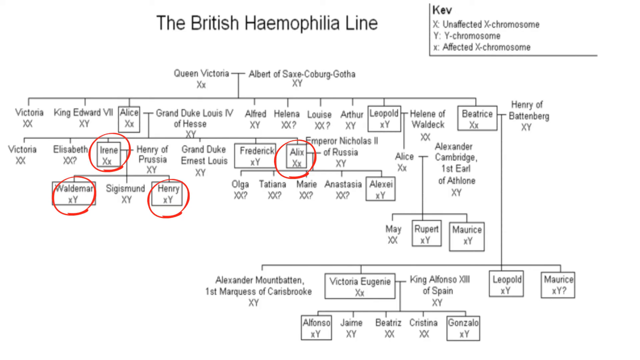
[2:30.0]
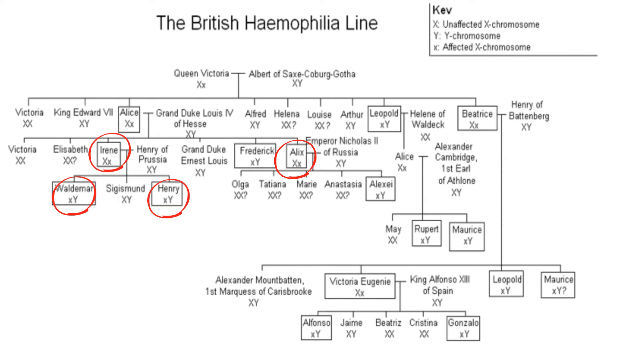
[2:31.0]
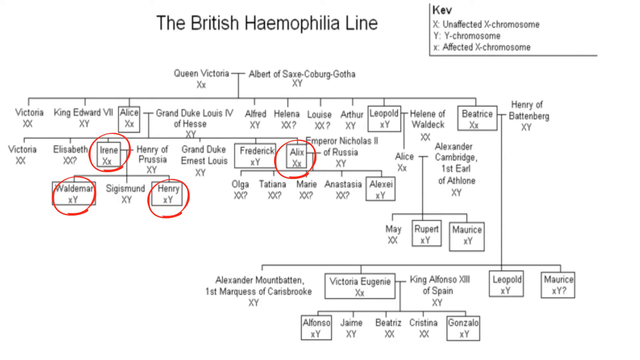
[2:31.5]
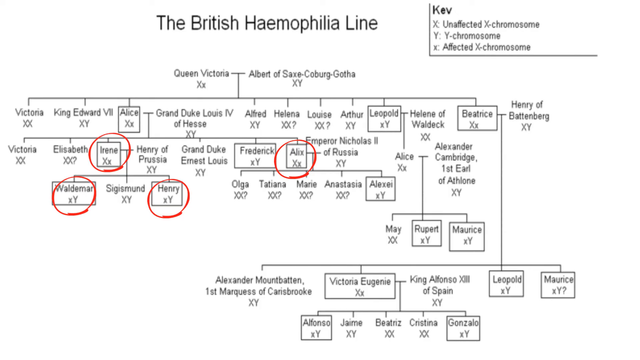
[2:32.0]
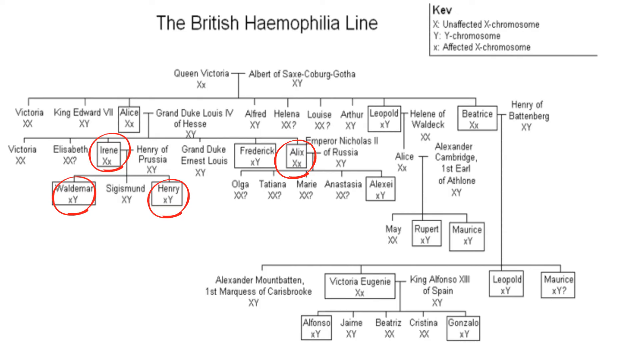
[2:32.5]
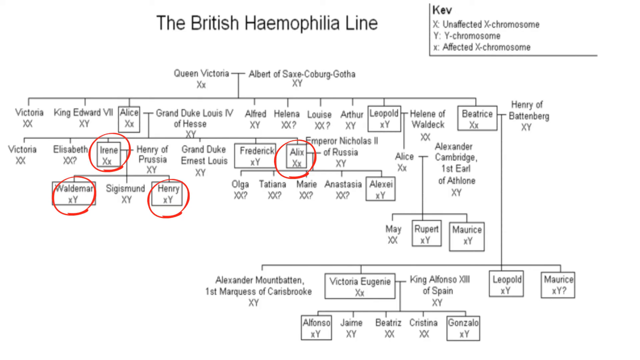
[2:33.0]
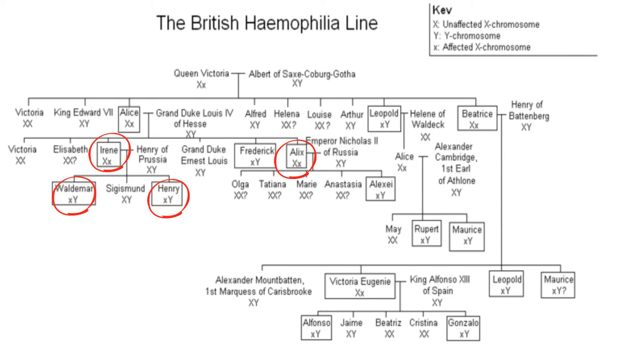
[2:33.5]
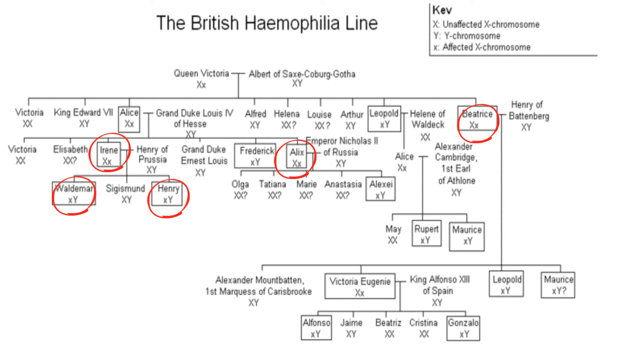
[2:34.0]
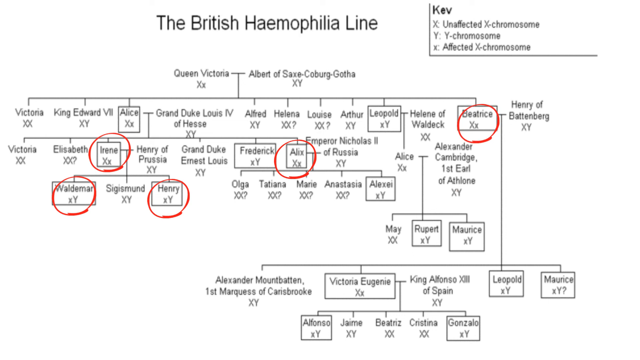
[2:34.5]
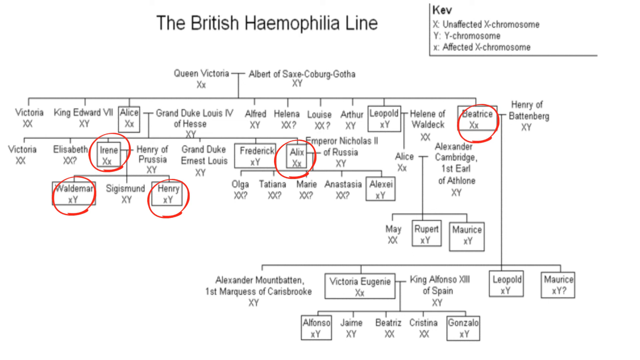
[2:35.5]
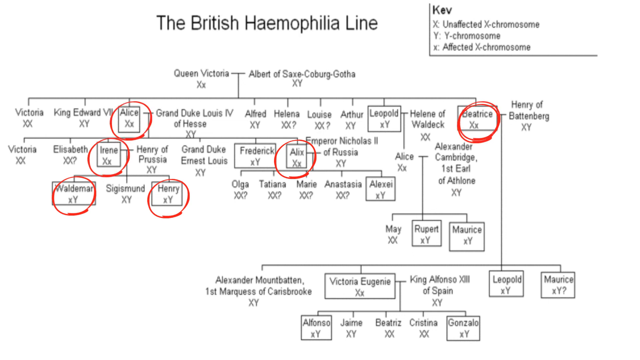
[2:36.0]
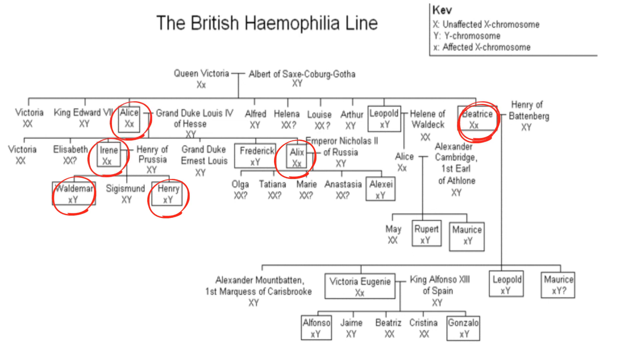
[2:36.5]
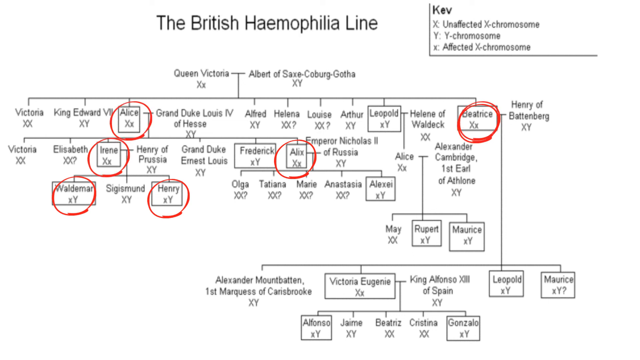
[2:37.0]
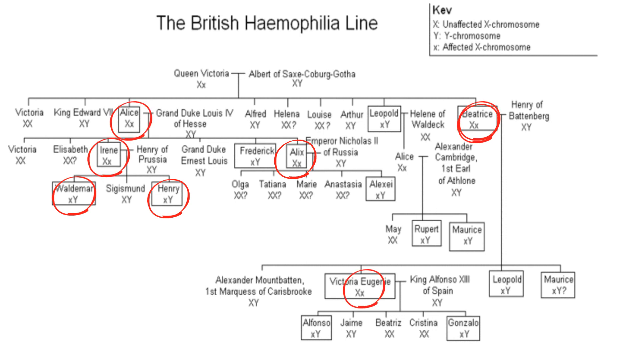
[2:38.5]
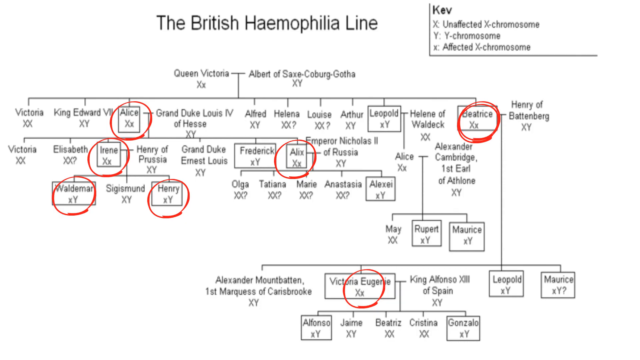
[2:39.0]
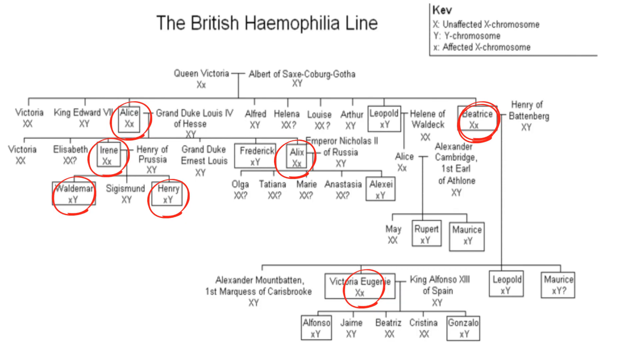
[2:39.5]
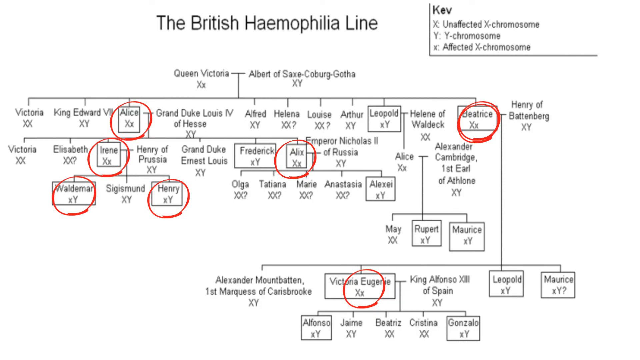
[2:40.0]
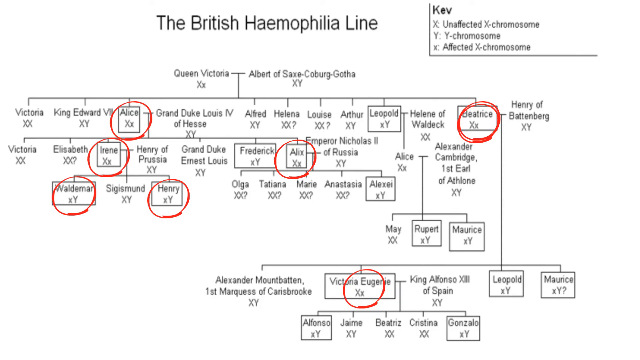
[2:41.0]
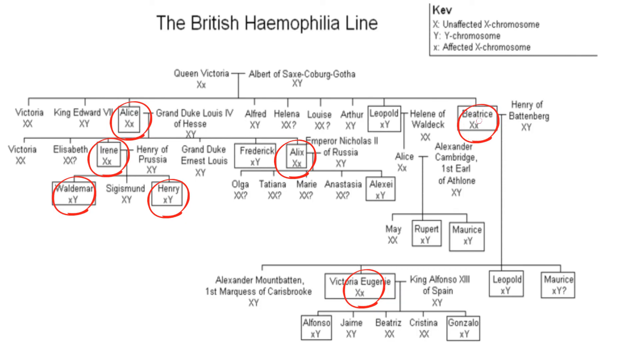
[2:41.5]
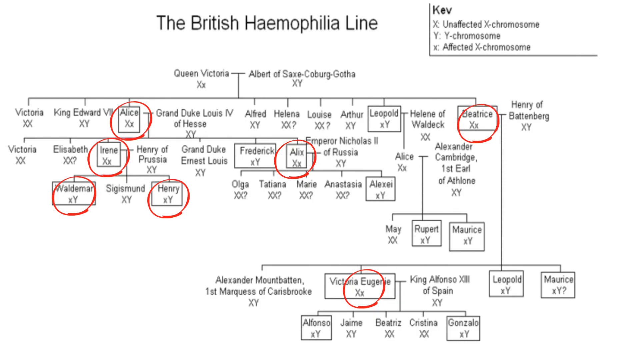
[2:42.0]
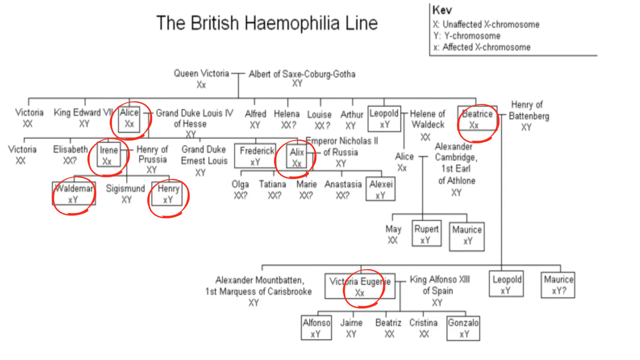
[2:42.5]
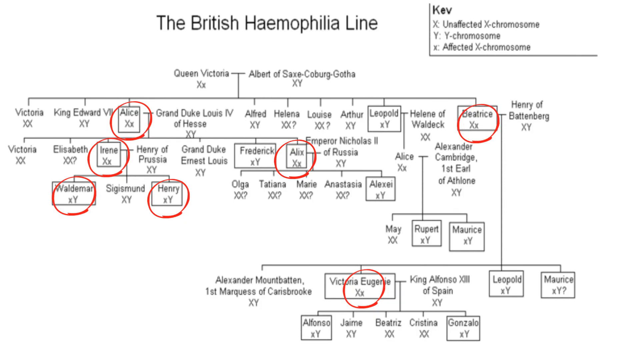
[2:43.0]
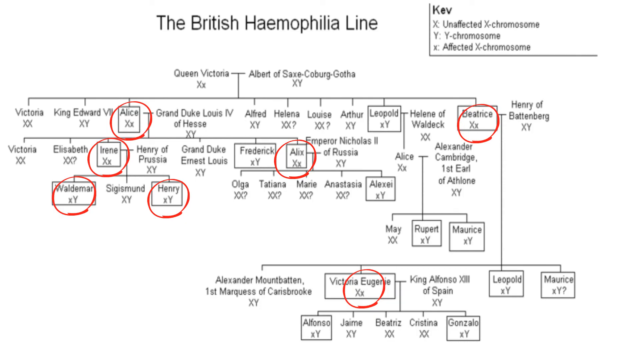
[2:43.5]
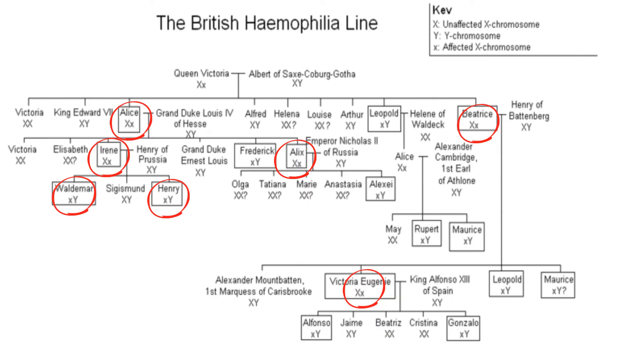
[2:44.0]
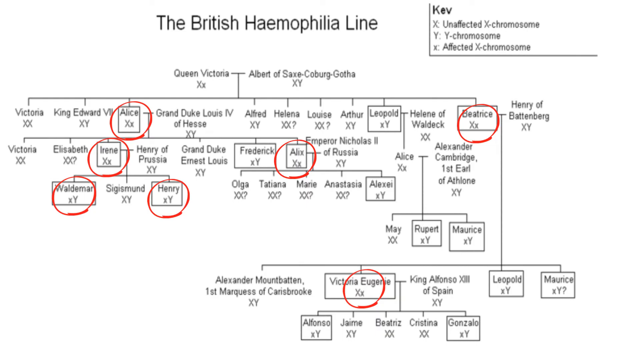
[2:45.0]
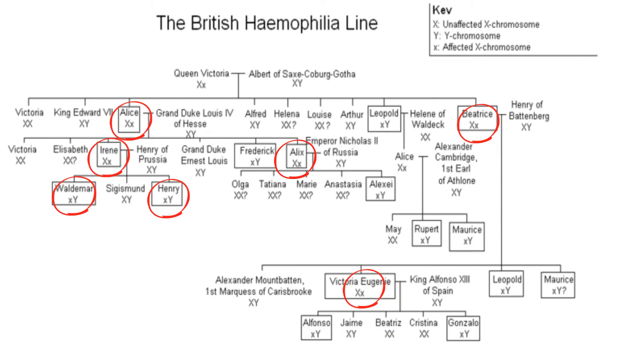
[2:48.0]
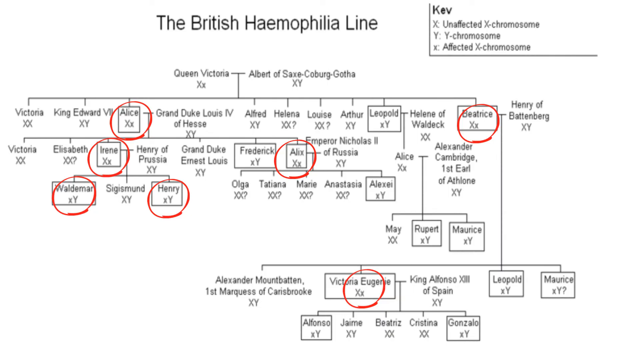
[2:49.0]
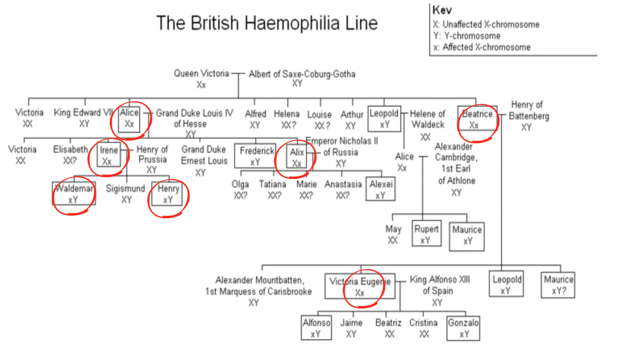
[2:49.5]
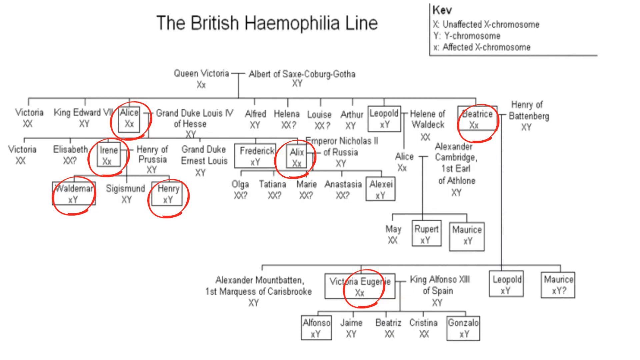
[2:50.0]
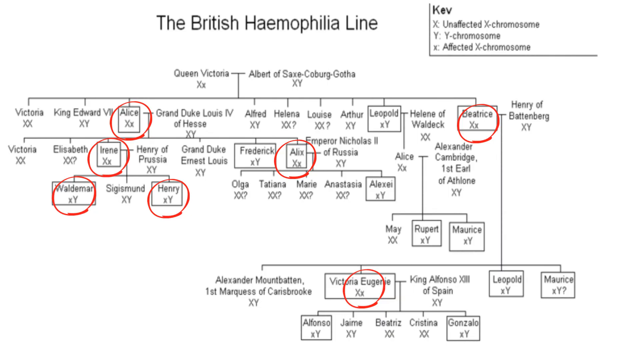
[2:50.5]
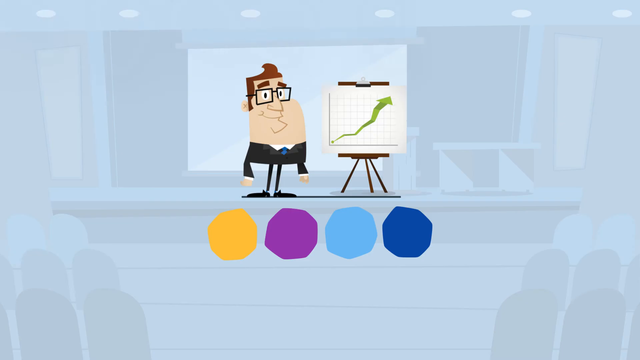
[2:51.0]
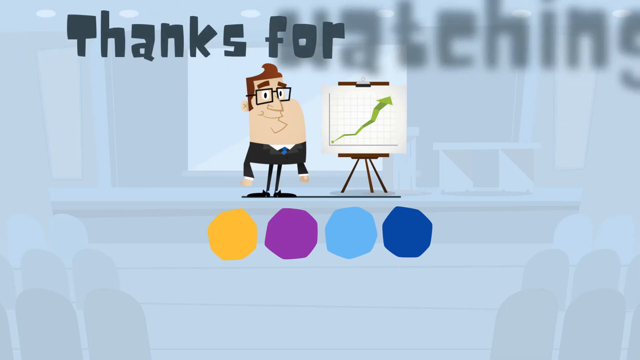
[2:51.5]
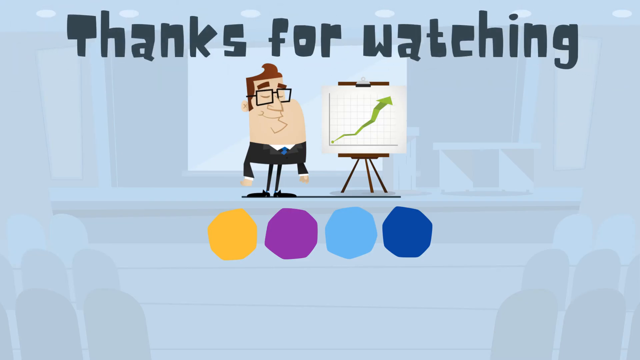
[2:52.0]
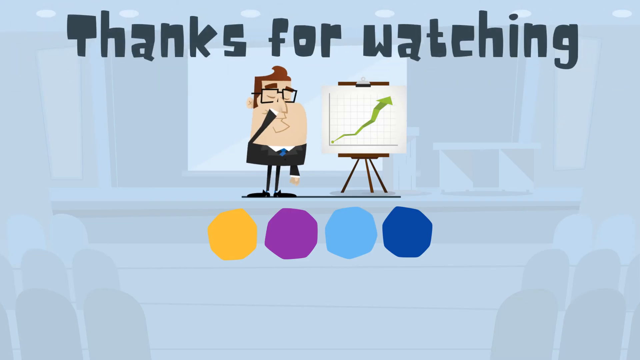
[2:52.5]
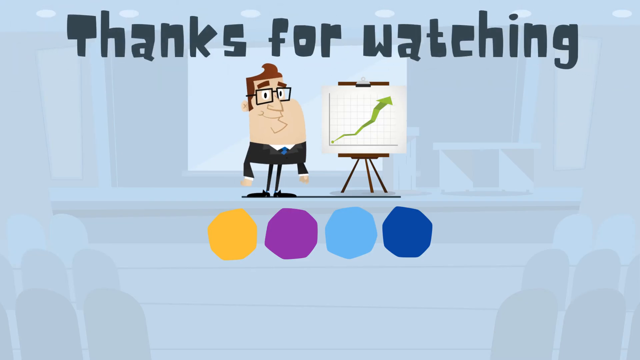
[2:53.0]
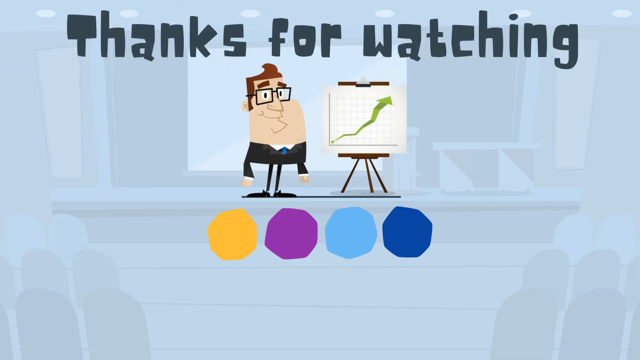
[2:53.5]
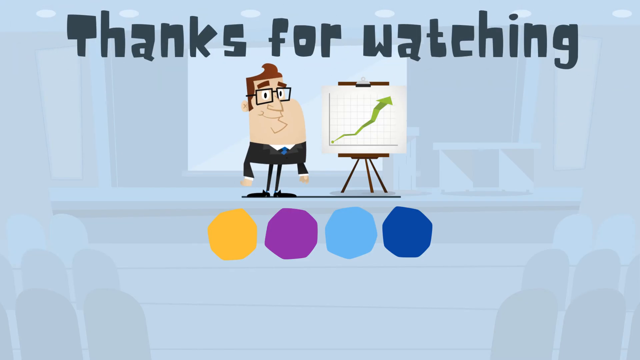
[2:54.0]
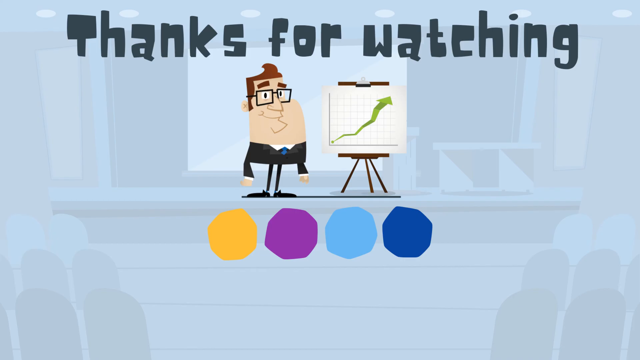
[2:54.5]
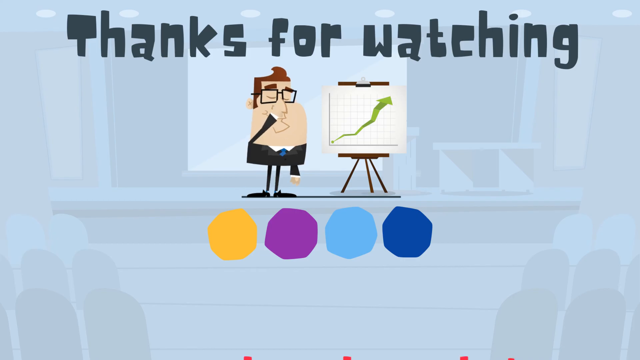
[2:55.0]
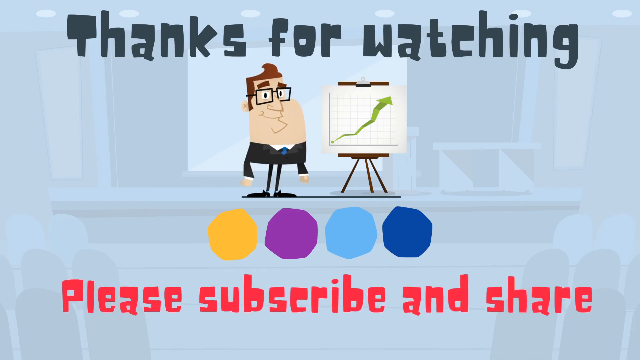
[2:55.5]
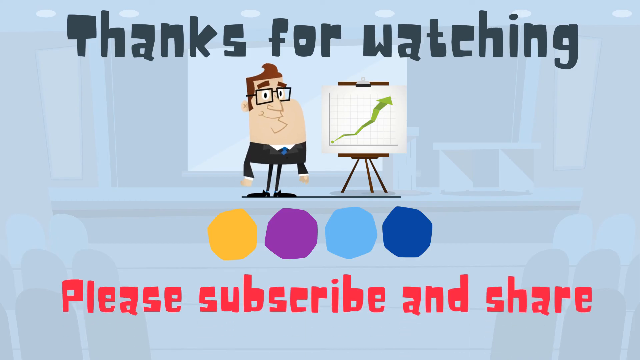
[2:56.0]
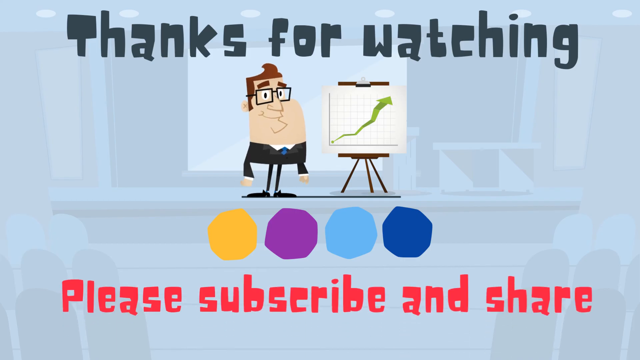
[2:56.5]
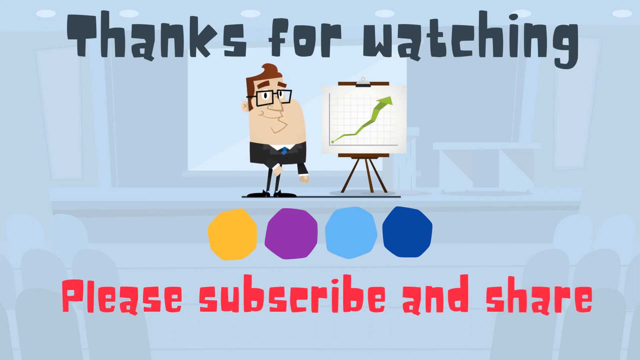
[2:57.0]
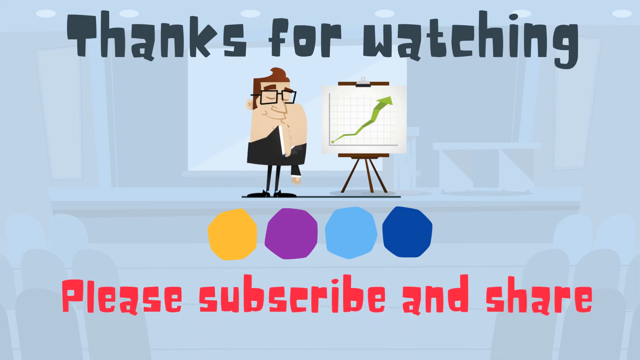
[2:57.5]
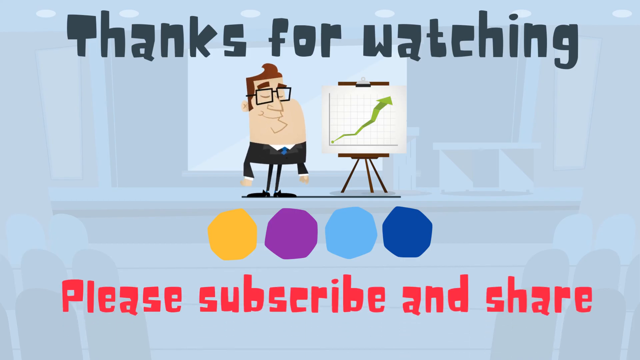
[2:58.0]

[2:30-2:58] The graph has circles around small boxes with names in them. On the second line is Irene, with a large X and a small x. In a different column is Alice, with a large X and a small x. The next circle is on the third line under Irene: Vladimir, with a small x and a large Y. Henry has a small x and a large Y. Beatrice, with a large X and a small x, is then circled. On the next line down is a Victoria, and Jean has a large X and a small x. Six names have red circles, each in a different column, lined across. Then "thanks for watching" appears on a light blue background, with an animated character underneath that has a very large tan square head and square black glasses; its animated eyes blink. To the right, in the middle, is a whiteboard with multiple small lines and a green line from the left to the right corner. Underneath are very roughly drawn circles colored completely in: gold, purple, light blue and dark blue. "Please subscribe and share" appears, and the little animated character waves.